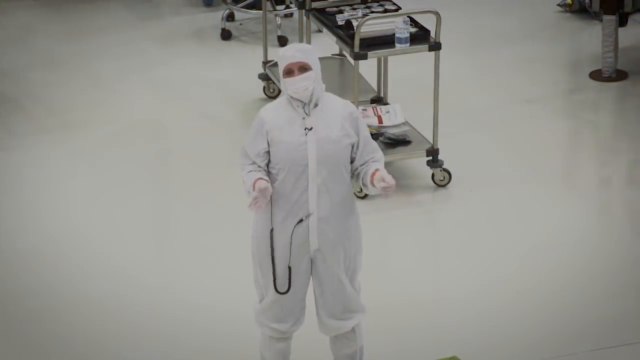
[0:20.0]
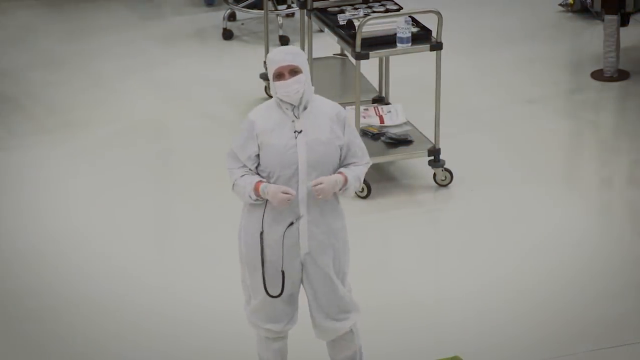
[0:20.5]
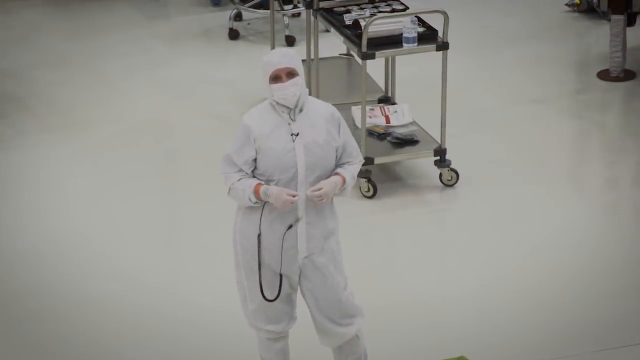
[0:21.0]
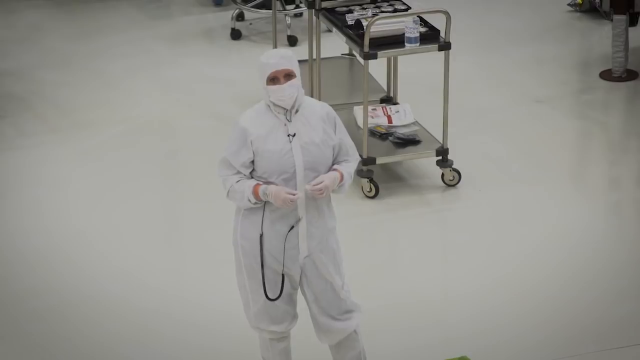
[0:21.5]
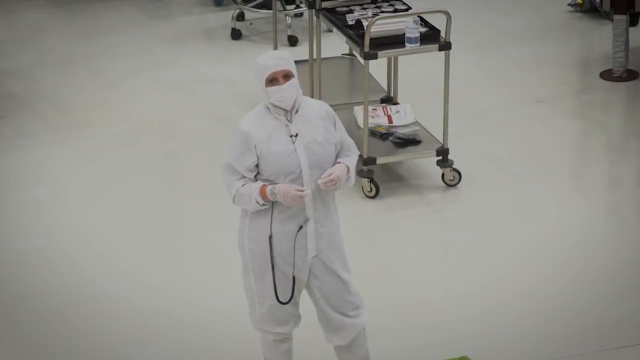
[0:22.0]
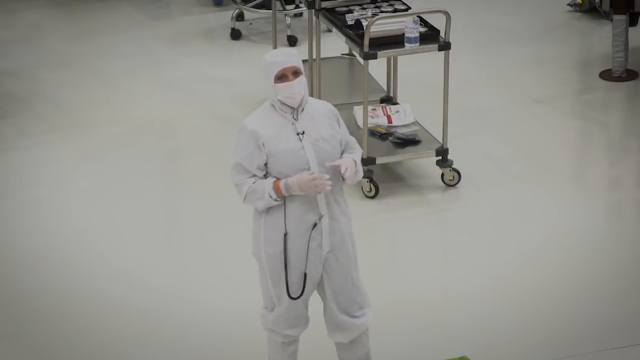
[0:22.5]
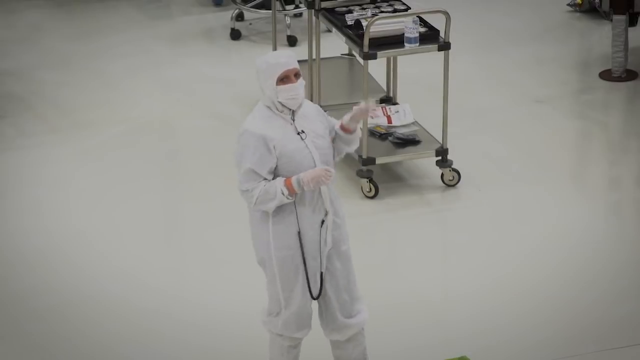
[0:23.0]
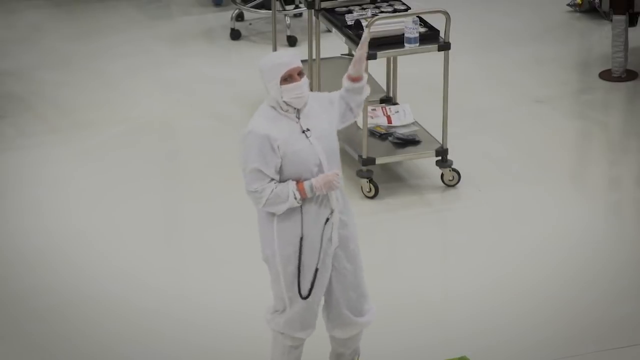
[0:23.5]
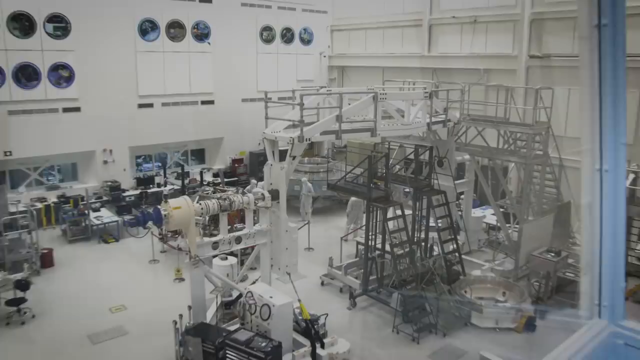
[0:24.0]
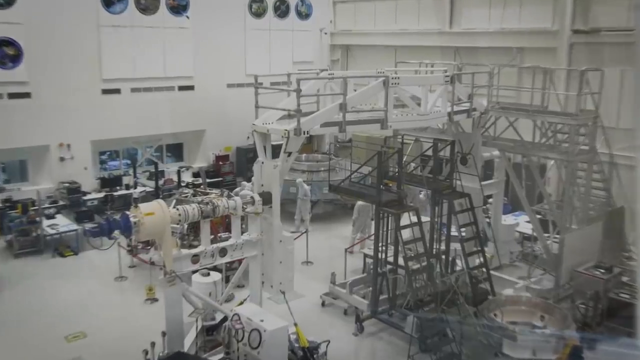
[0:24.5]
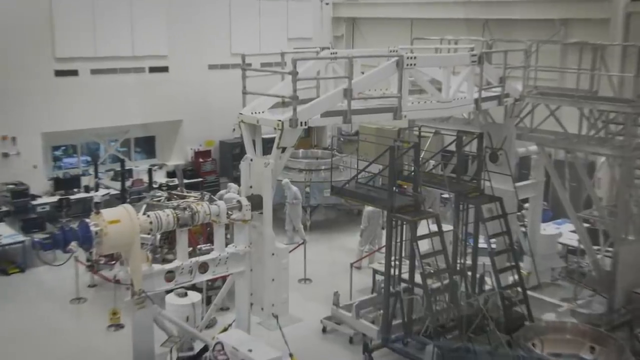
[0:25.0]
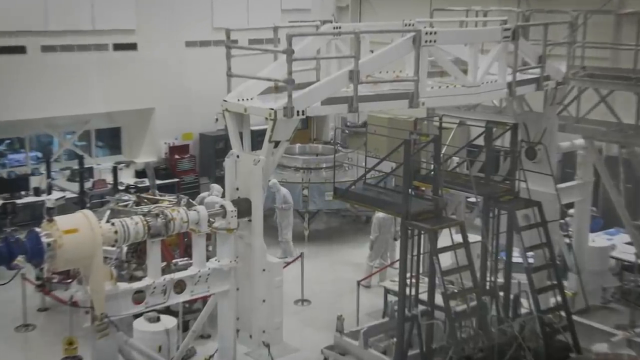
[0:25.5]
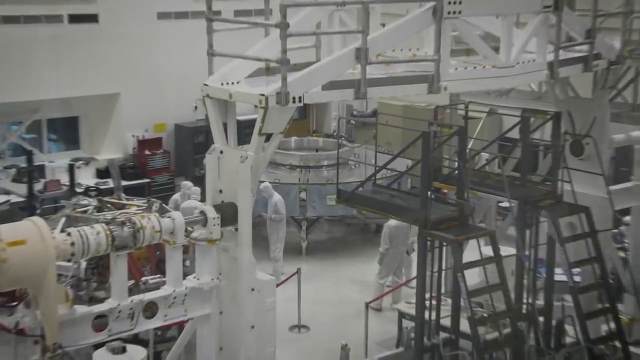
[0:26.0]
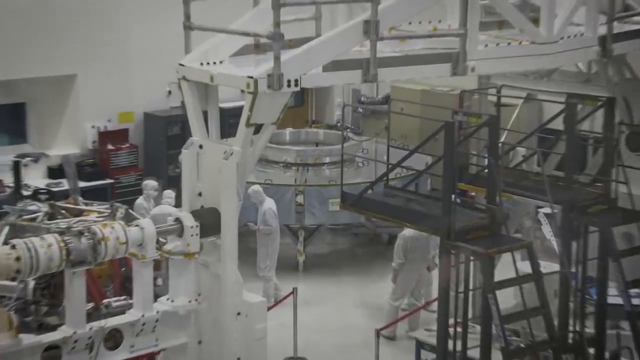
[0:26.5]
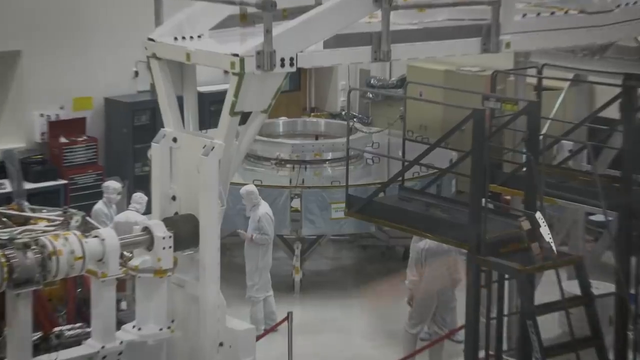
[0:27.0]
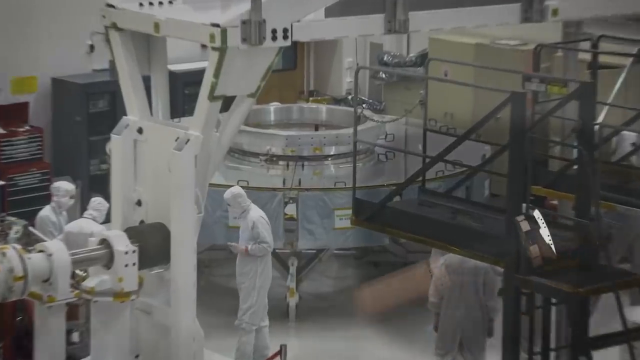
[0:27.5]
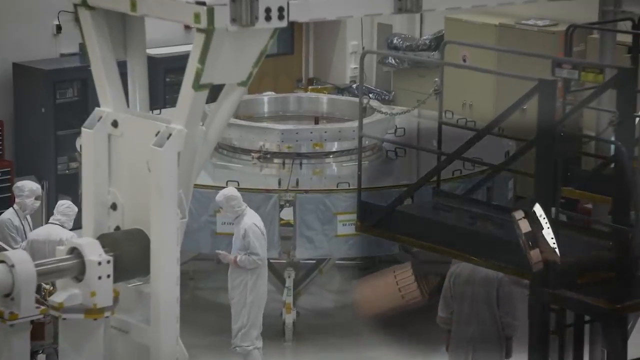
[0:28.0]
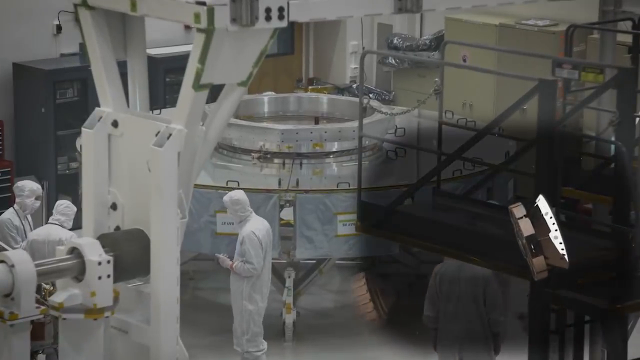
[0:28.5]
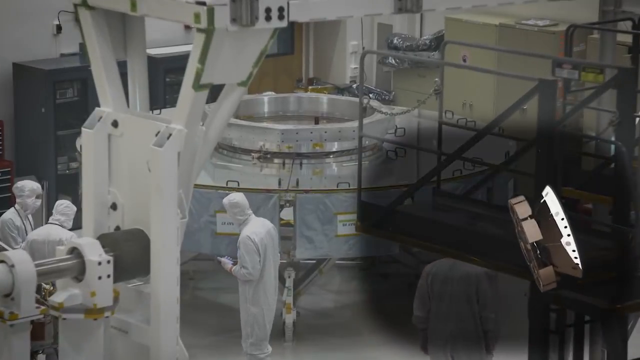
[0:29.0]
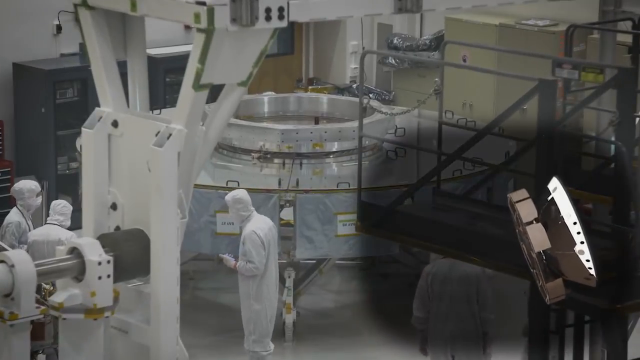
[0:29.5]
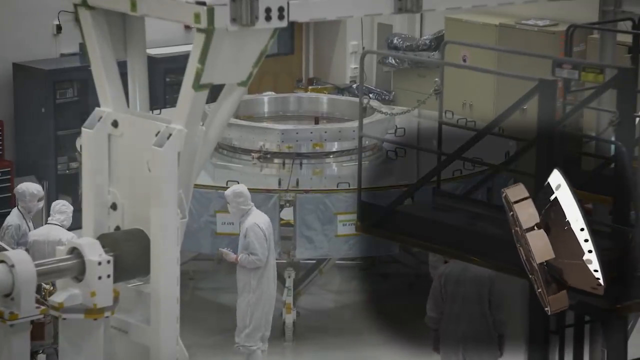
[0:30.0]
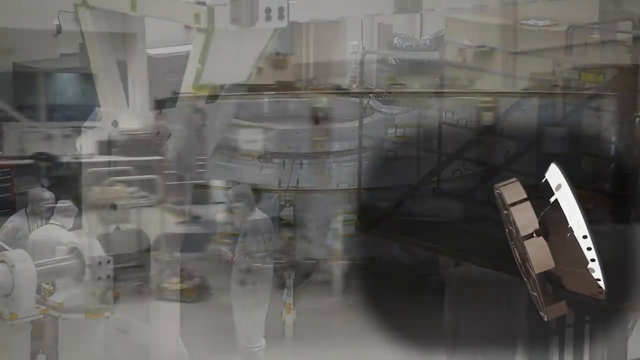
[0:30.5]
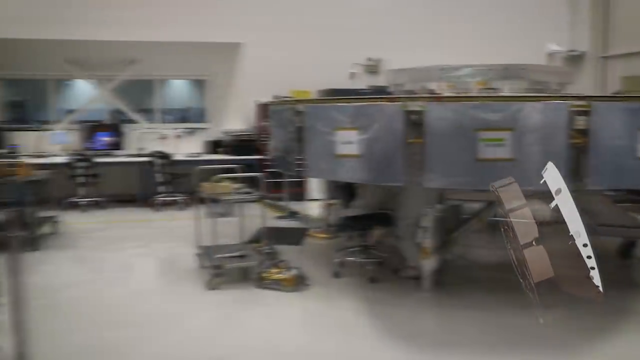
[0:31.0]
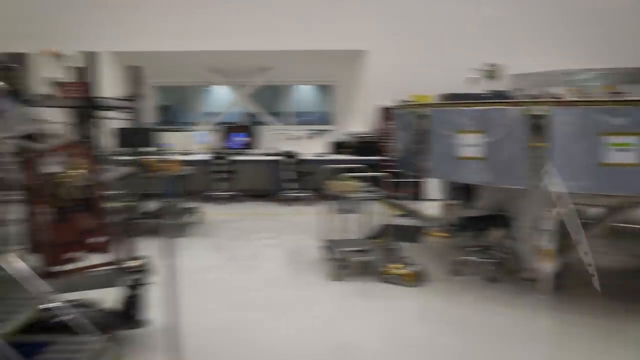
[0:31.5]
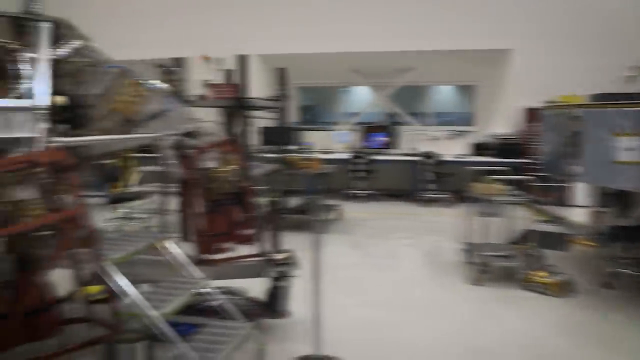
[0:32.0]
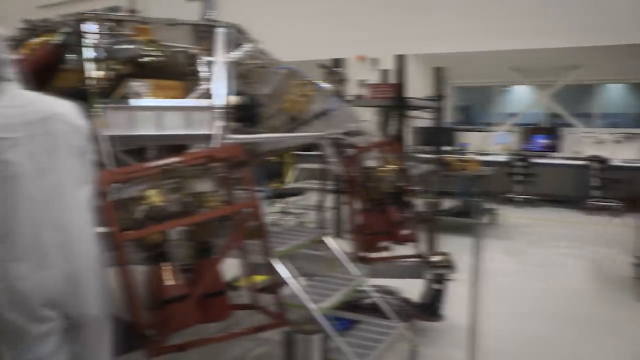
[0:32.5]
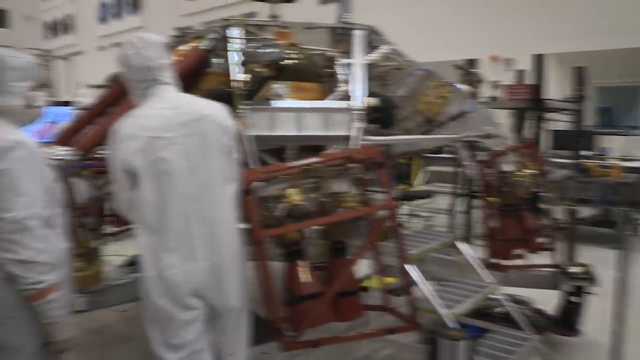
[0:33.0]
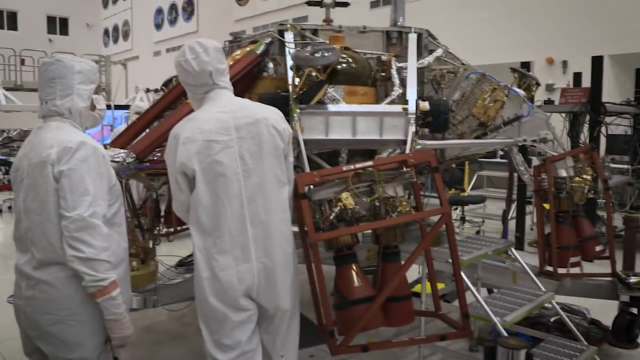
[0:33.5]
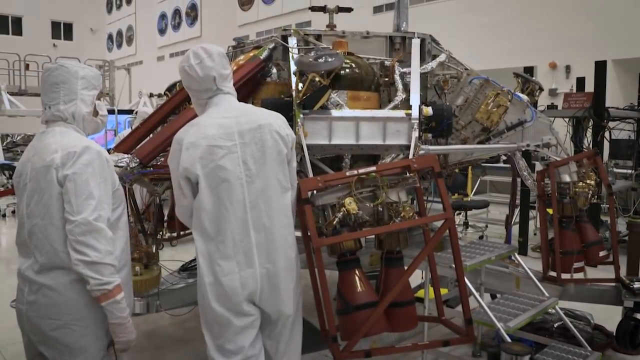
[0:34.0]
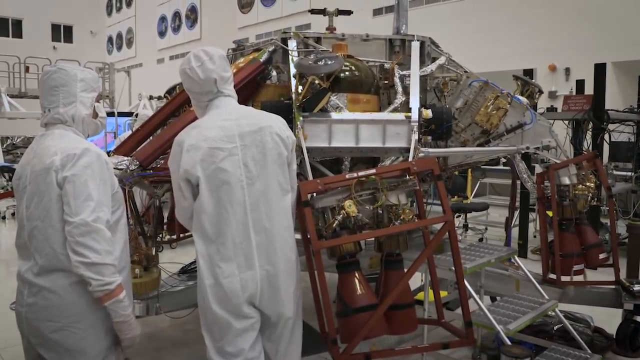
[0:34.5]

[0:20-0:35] The woman keeps talking to the camera, which is high up and looks down at her on the floor. She points with her left arm toward a different part of the facility, and the camera pans over to show more scientists working on what appears to be the vehicle part of the Mars rover, a very futuristic, spaceship-like object. At one point a graphic shows a rocket launched into space and, once it is far into space, the piece being built here.